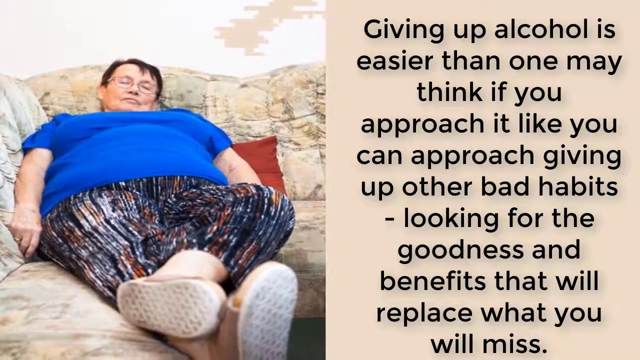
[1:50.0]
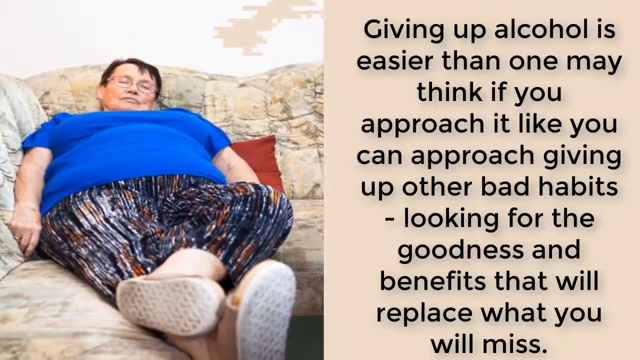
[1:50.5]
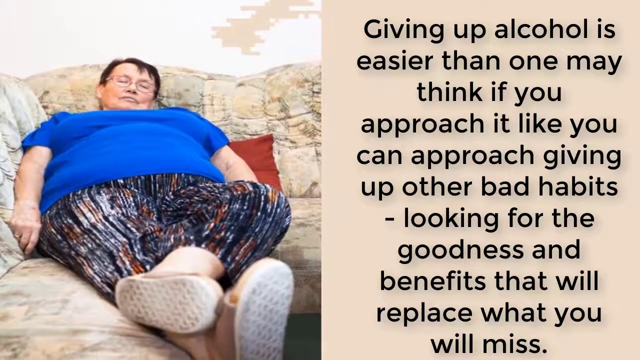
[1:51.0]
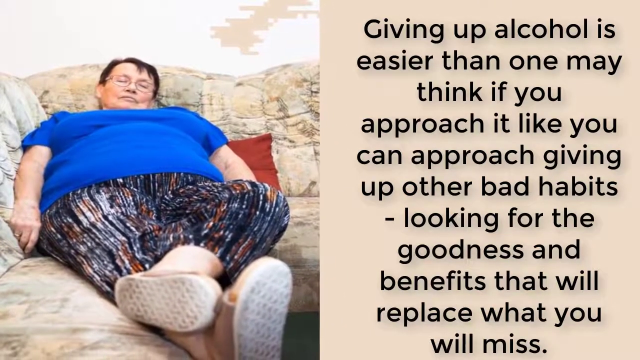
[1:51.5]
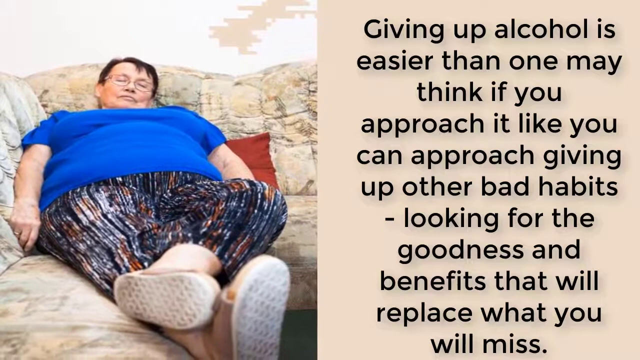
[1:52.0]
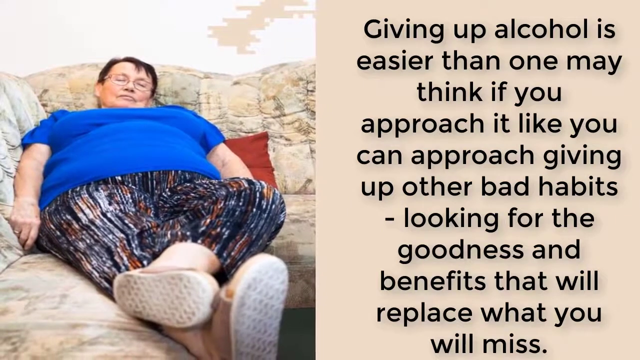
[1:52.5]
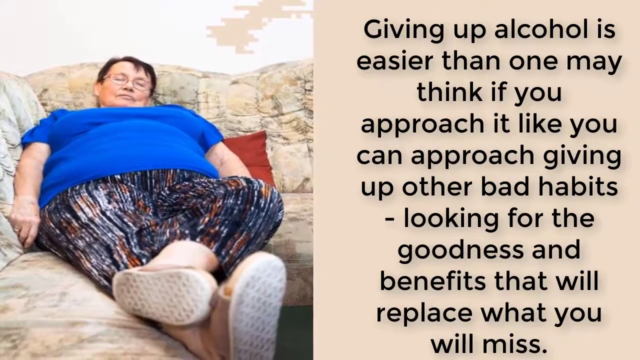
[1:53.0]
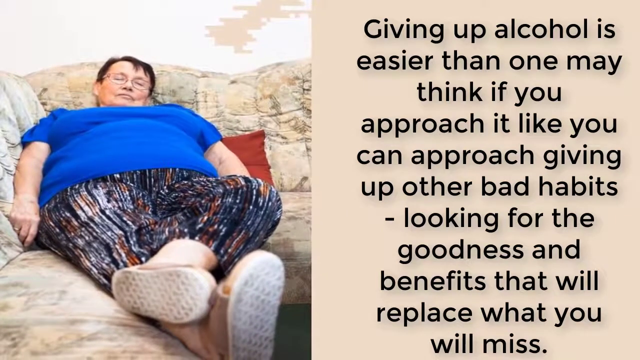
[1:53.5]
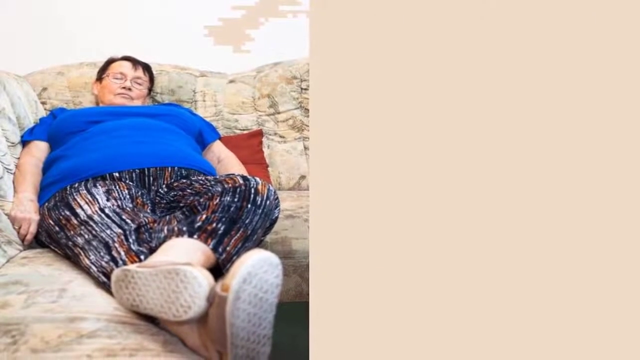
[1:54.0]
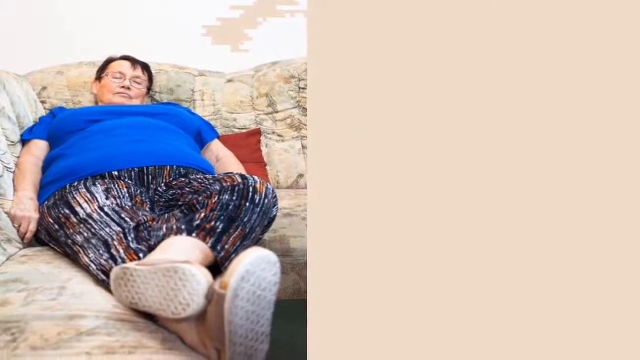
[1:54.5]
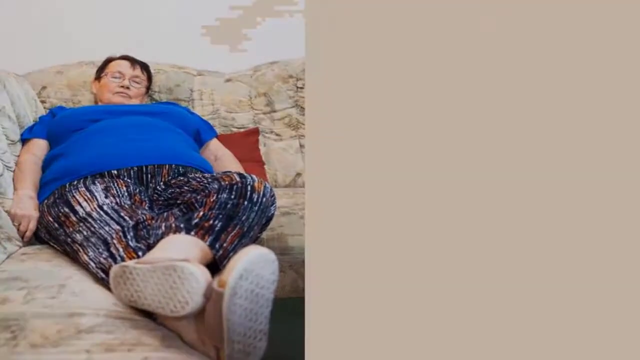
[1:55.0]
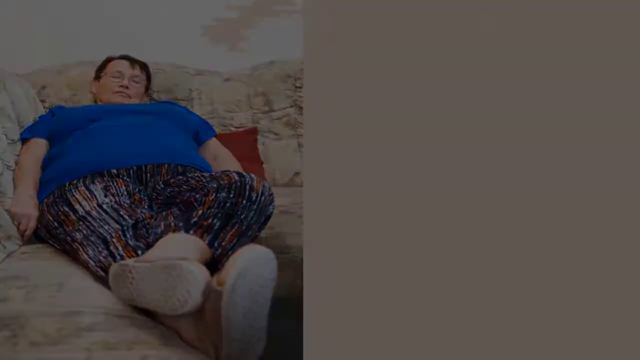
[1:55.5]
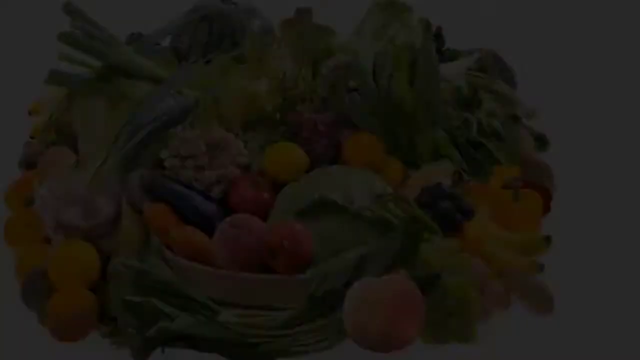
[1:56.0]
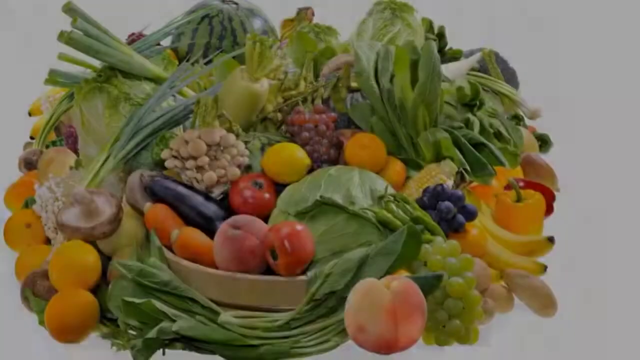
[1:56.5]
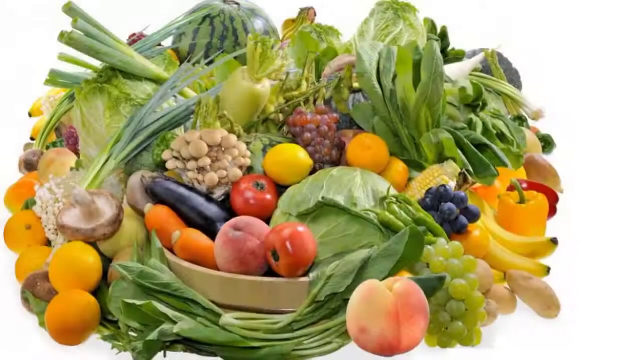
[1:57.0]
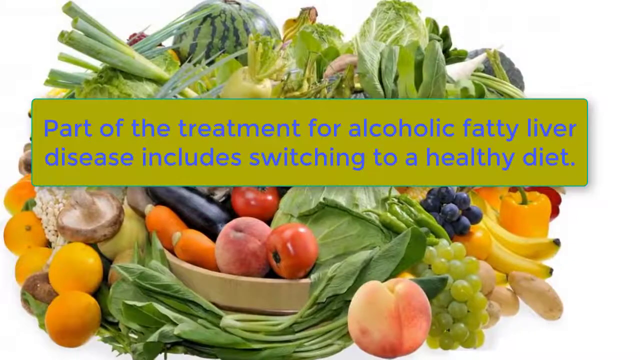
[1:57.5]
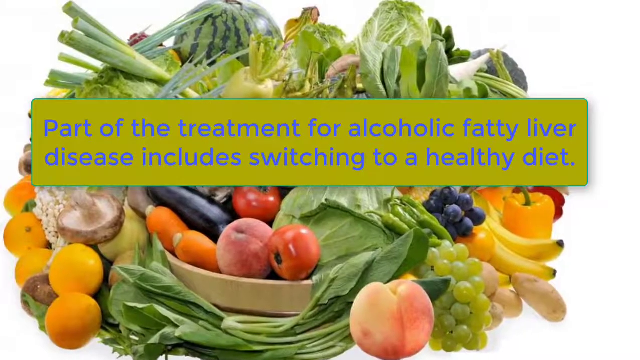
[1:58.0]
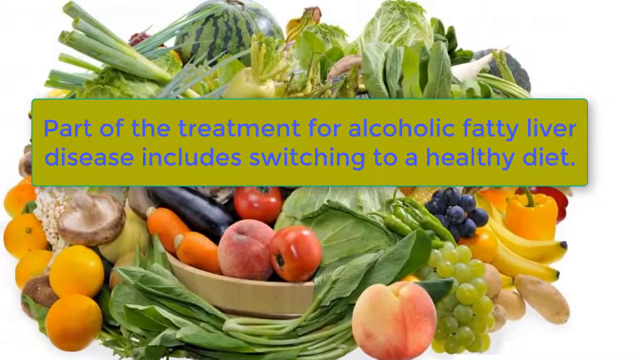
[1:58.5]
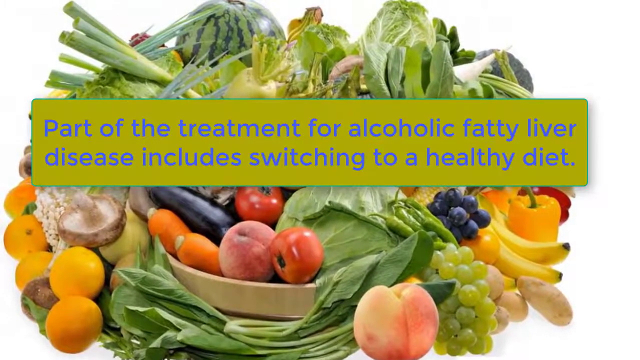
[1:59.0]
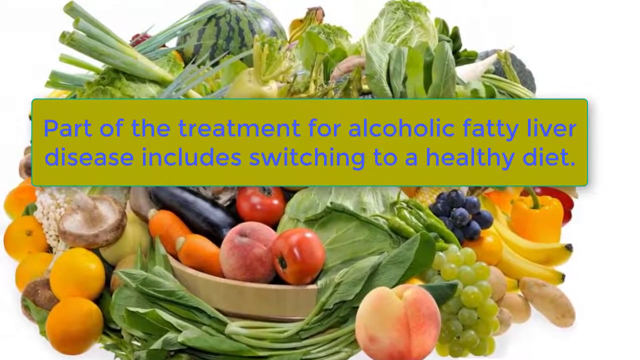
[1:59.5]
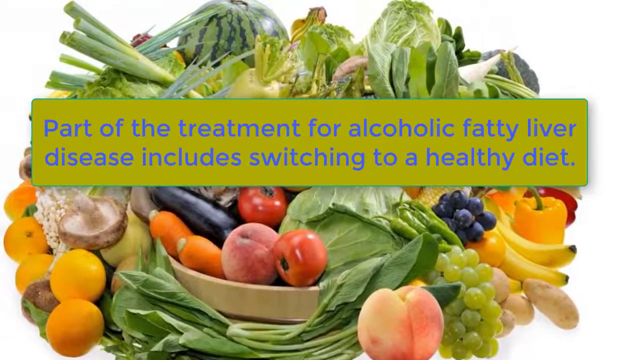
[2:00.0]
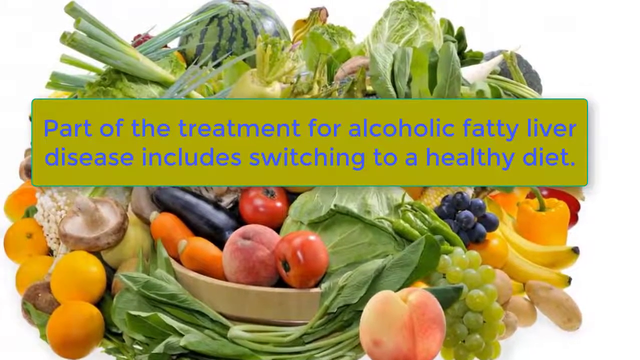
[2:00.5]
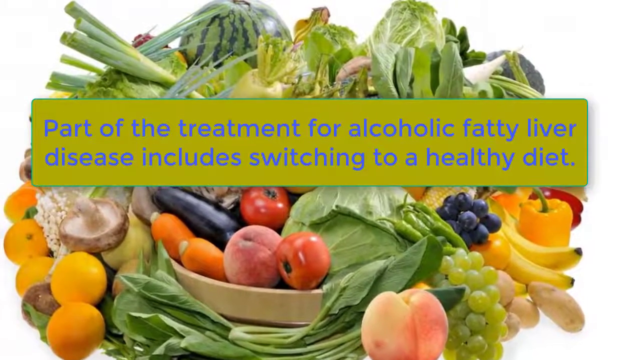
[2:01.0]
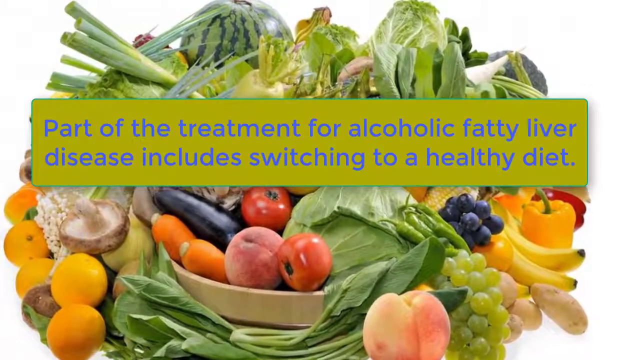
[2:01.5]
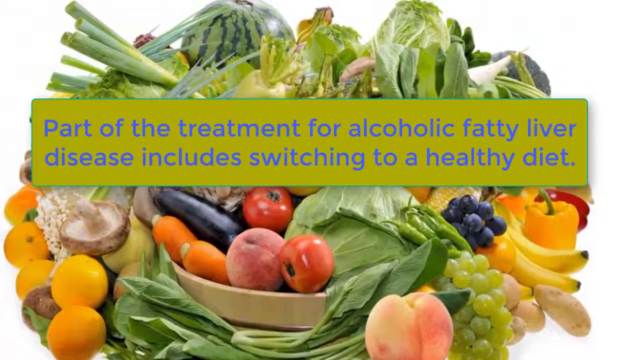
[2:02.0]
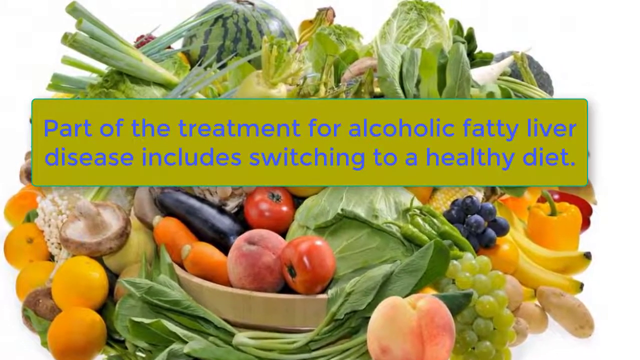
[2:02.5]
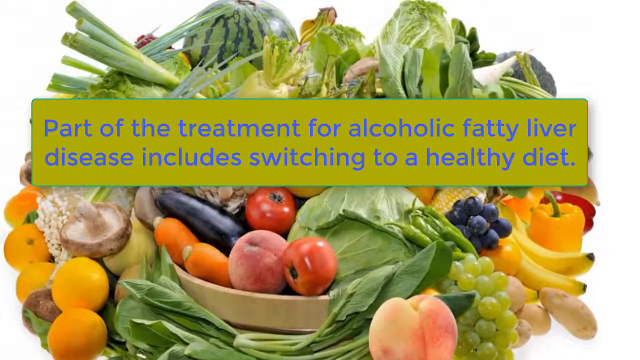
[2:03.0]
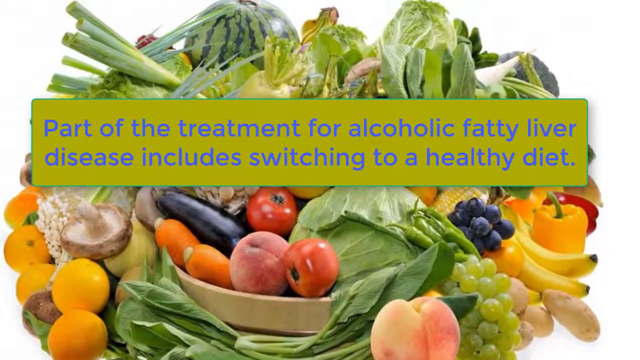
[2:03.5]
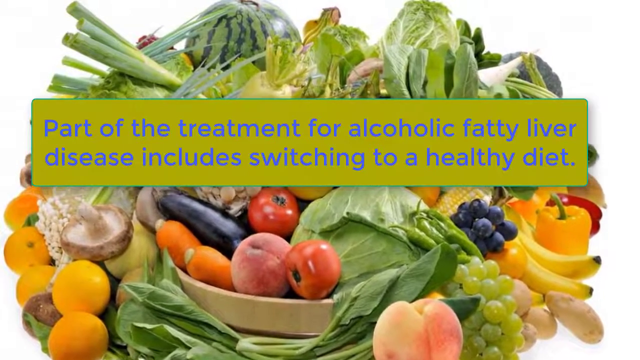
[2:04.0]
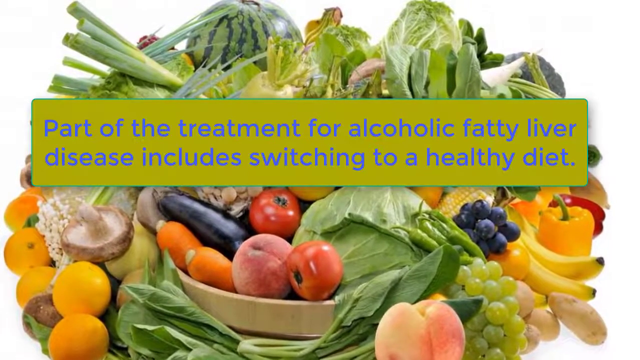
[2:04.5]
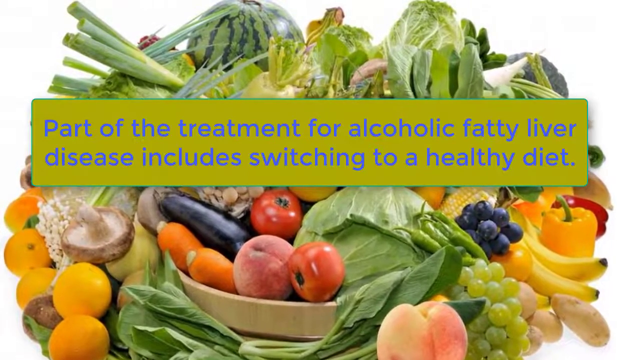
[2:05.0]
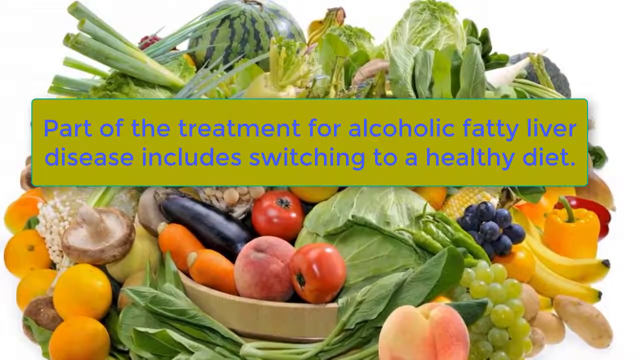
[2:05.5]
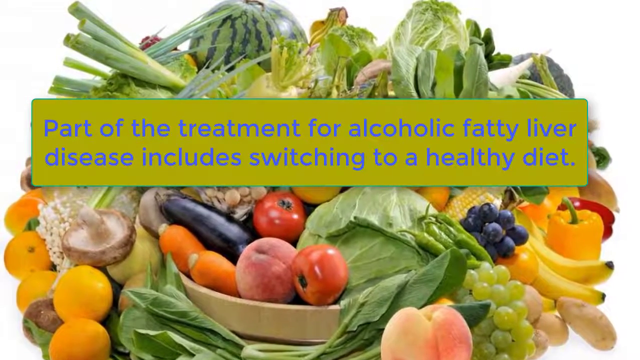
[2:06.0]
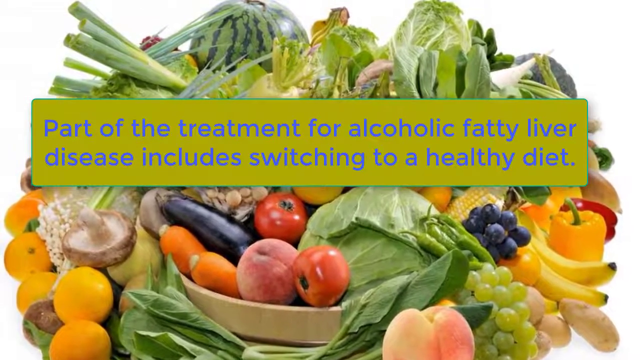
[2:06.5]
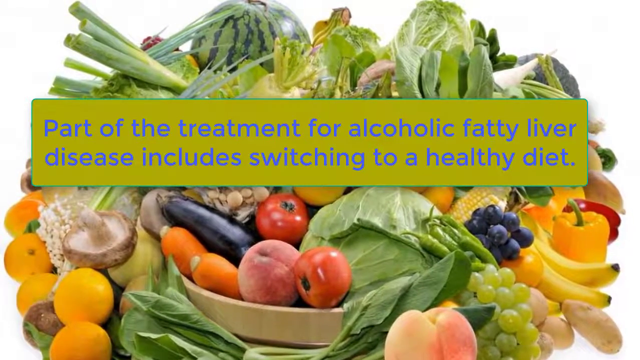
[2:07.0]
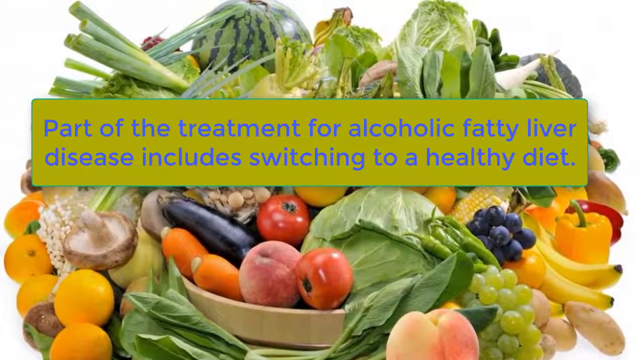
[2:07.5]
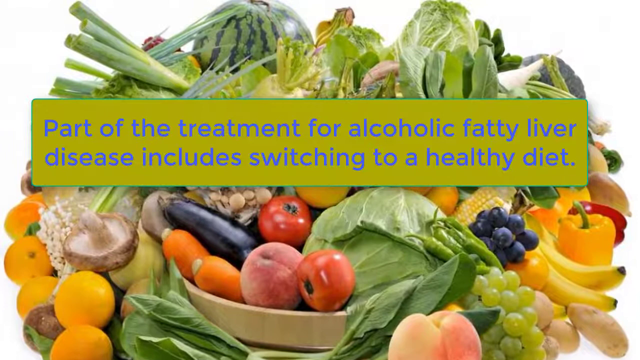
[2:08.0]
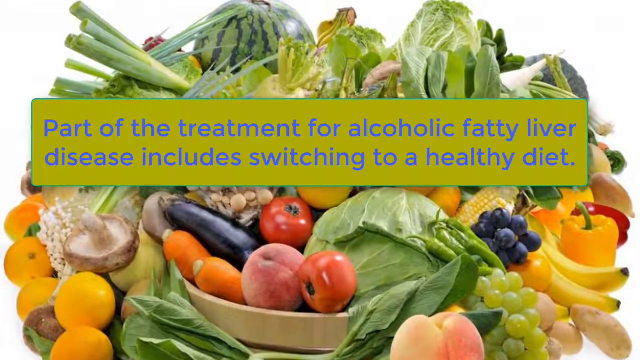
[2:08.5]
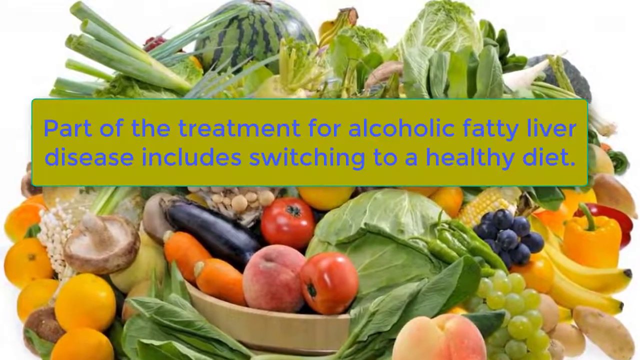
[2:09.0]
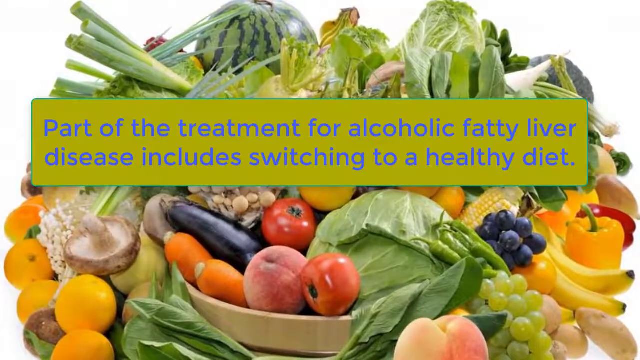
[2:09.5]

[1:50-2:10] The obese woman is sleeping on the couch. She seems to have fallen asleep, since her glasses are still on, her legs are crossed and she is dressed. The view zooms out on her, and then the next image is a big display of fruits and vegetables. Text across the center of the screen reads "Part of the treatment for alcoholic fatty liver disease includes switching to a healthy diet." The assortment includes peaches, tomatoes, grapes, bananas, peppers, mushrooms and many other fruits and vegetables. The view zooms in closer on them.